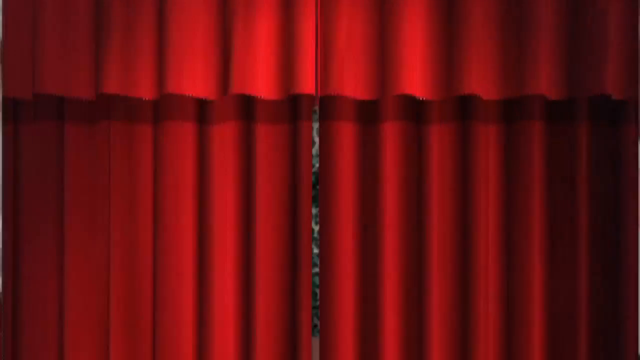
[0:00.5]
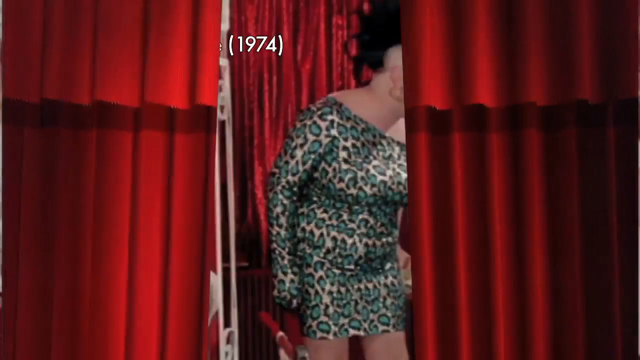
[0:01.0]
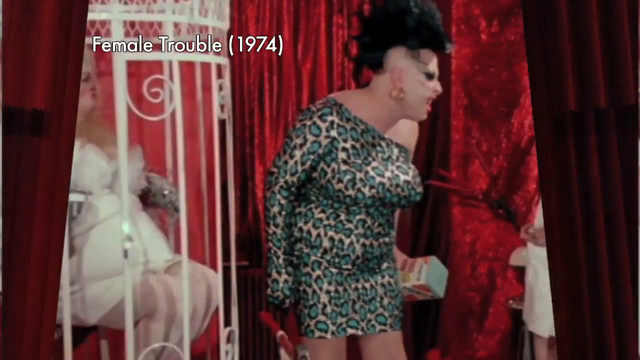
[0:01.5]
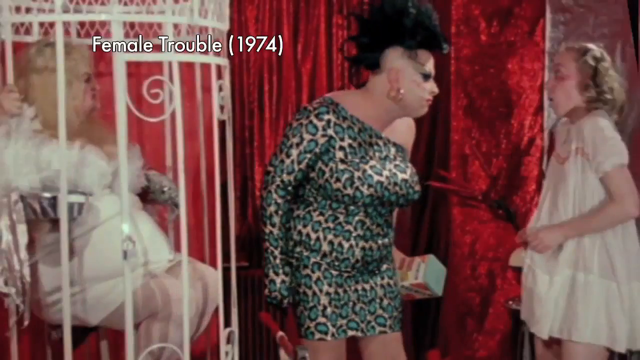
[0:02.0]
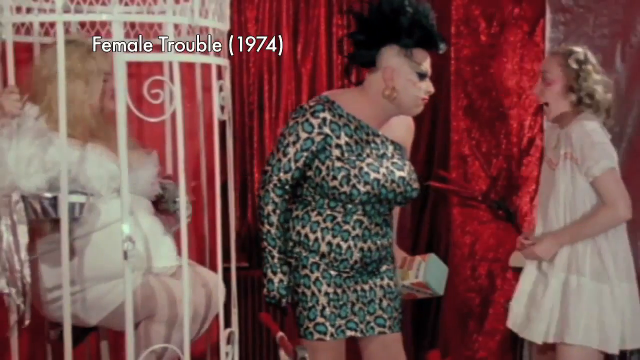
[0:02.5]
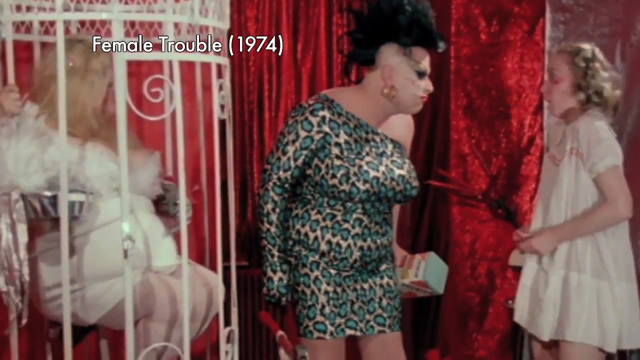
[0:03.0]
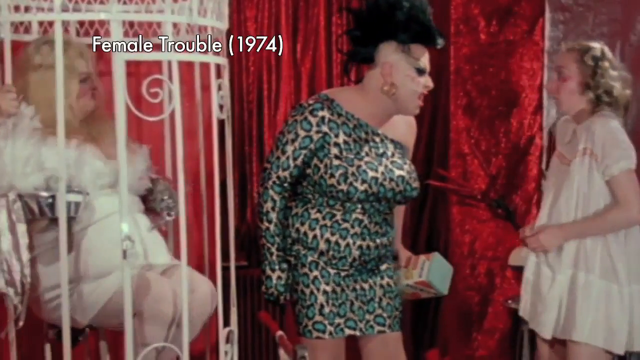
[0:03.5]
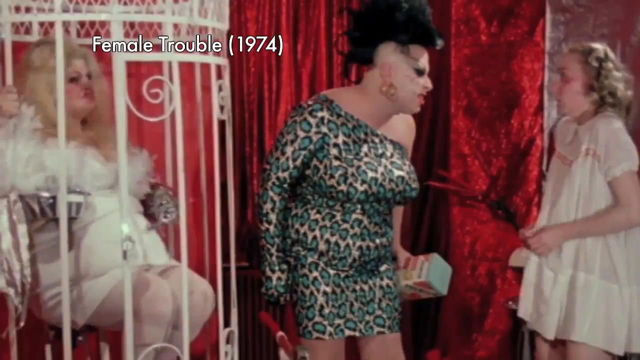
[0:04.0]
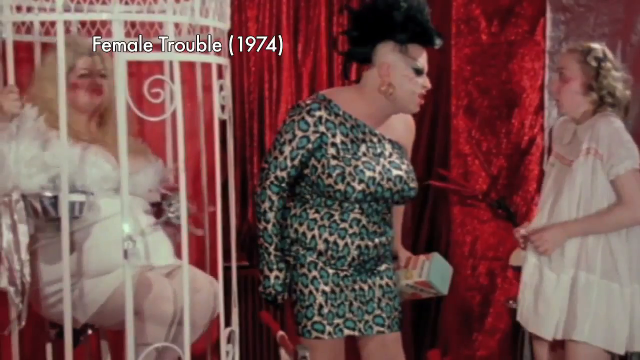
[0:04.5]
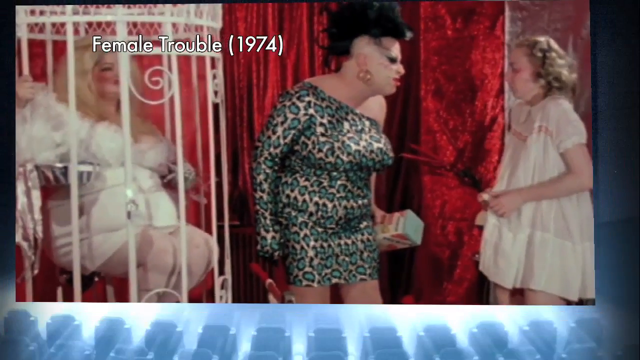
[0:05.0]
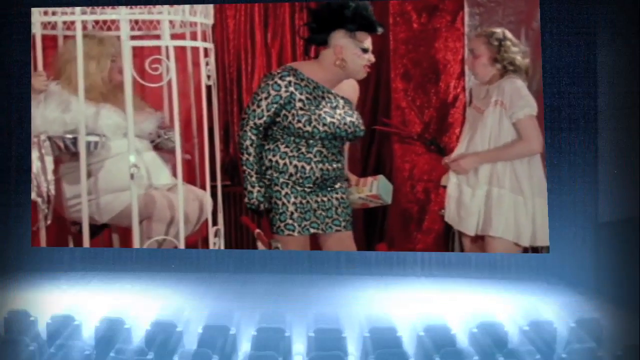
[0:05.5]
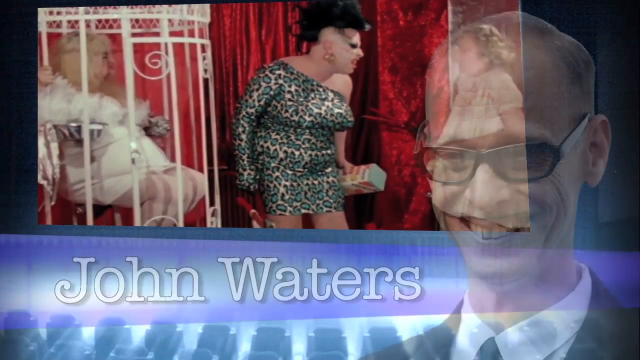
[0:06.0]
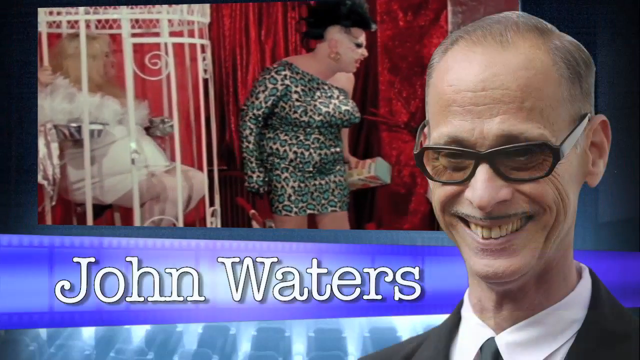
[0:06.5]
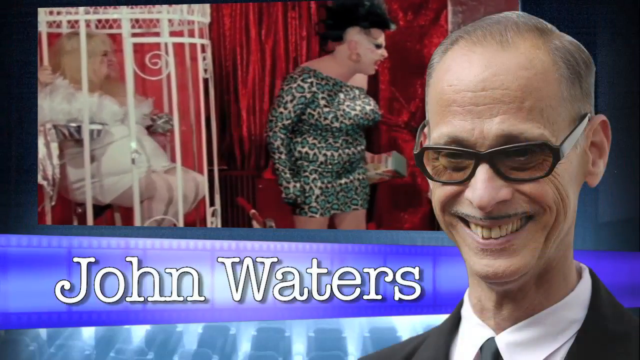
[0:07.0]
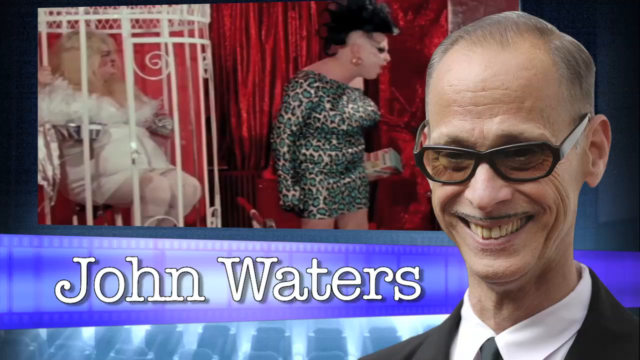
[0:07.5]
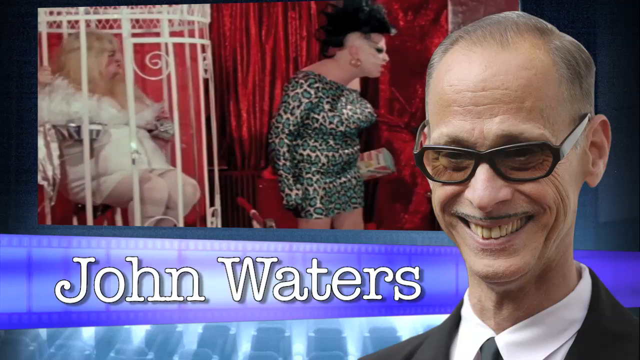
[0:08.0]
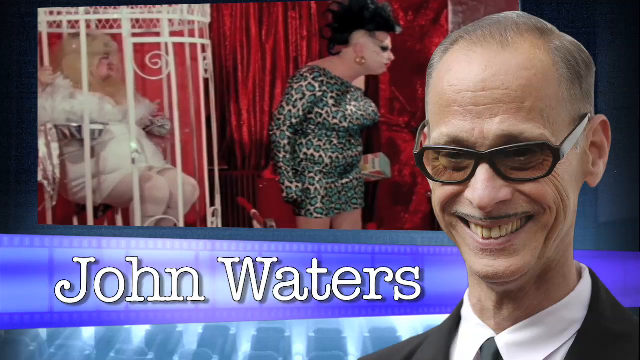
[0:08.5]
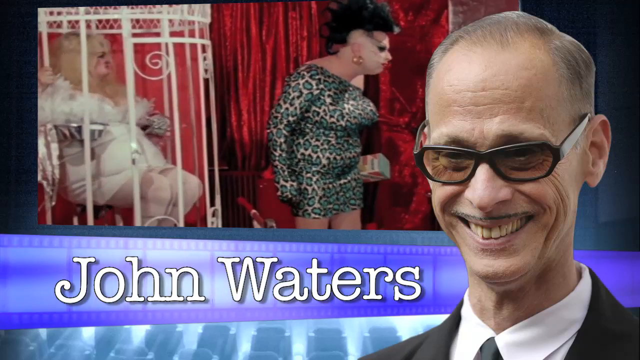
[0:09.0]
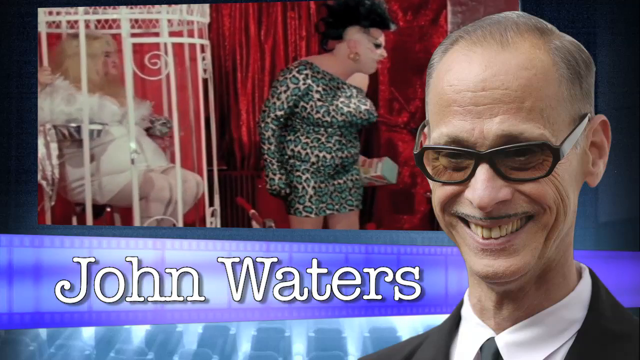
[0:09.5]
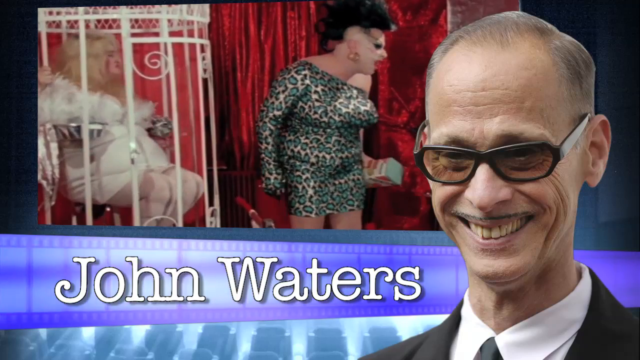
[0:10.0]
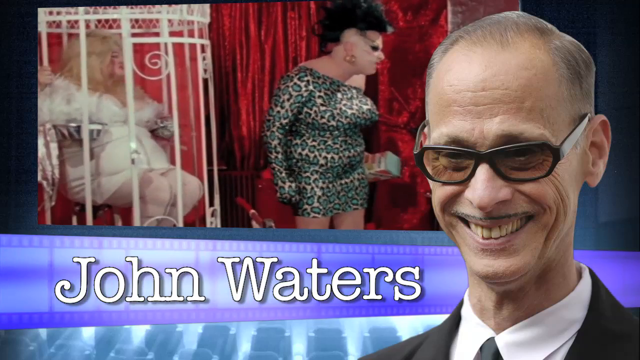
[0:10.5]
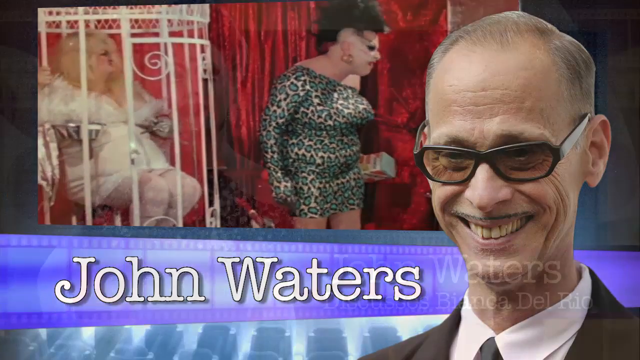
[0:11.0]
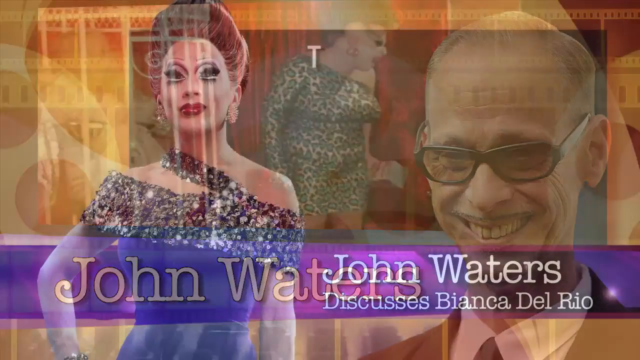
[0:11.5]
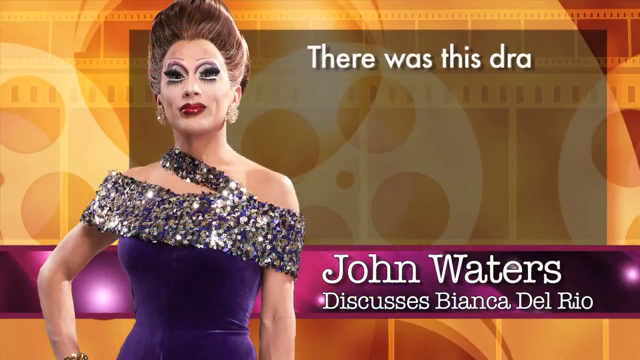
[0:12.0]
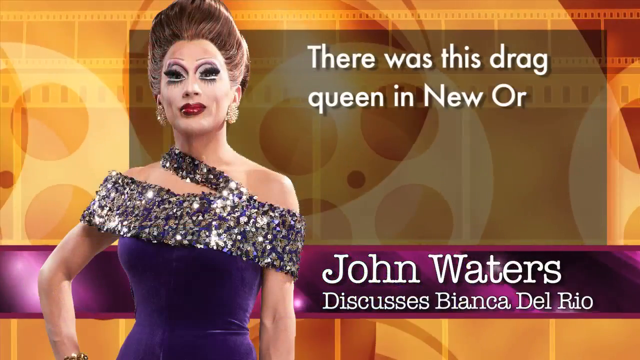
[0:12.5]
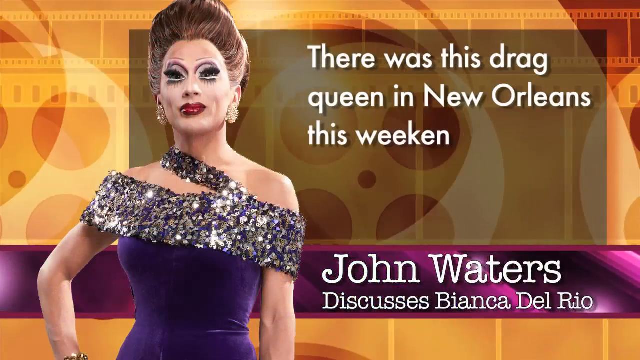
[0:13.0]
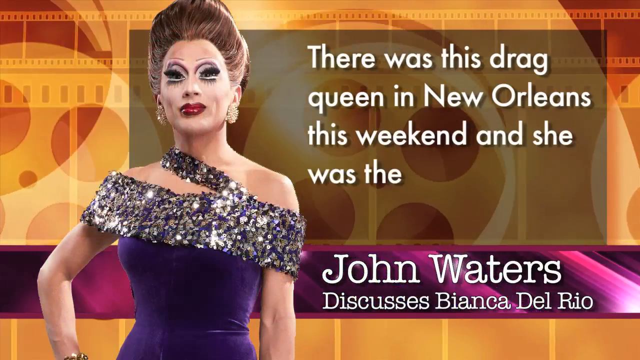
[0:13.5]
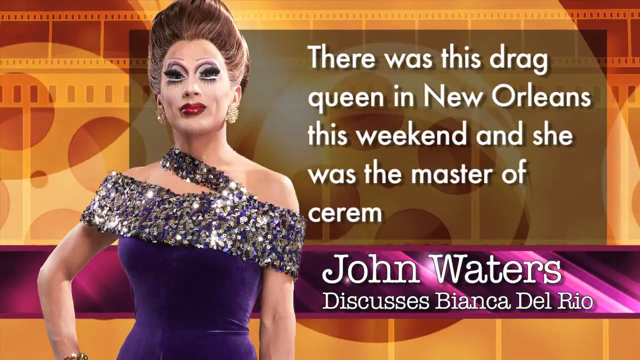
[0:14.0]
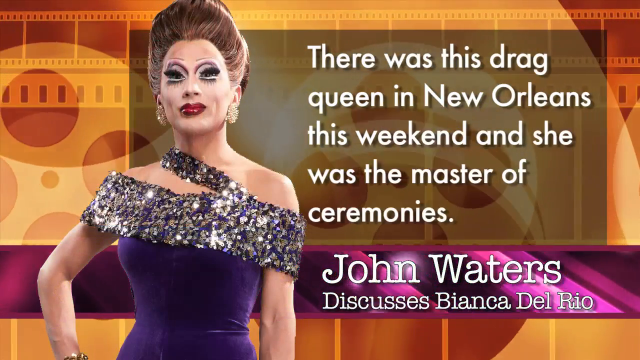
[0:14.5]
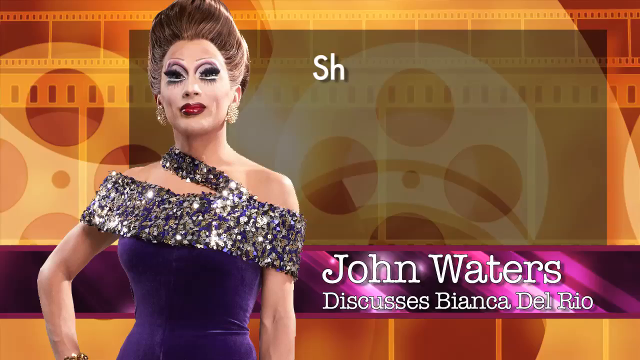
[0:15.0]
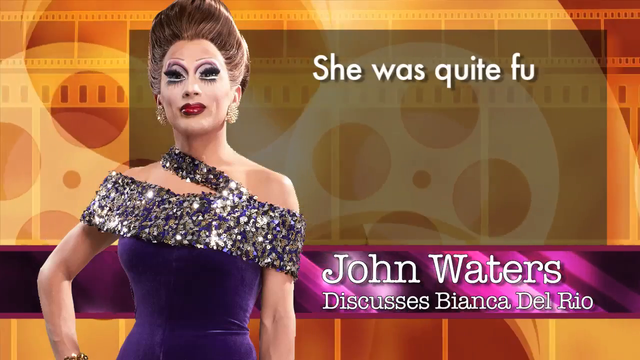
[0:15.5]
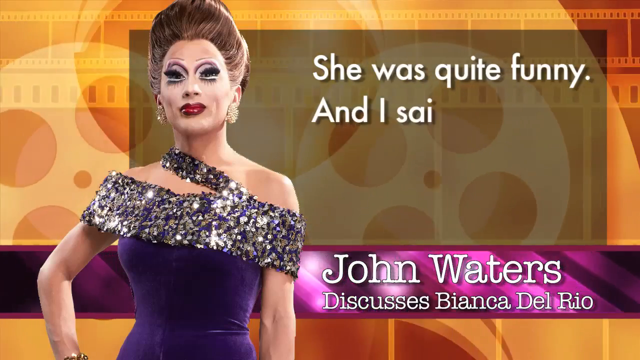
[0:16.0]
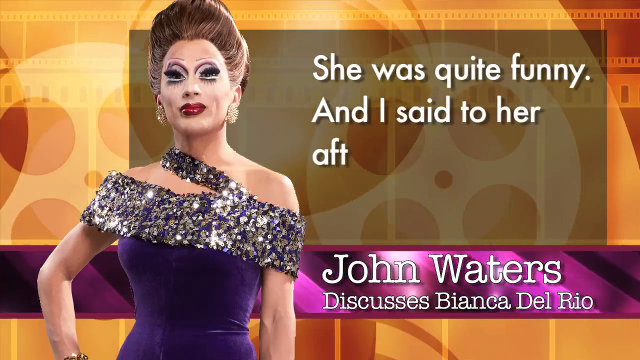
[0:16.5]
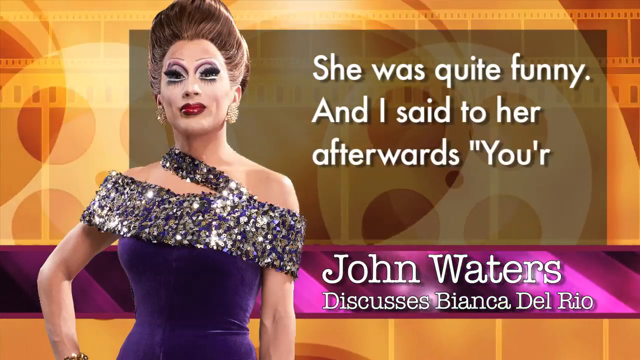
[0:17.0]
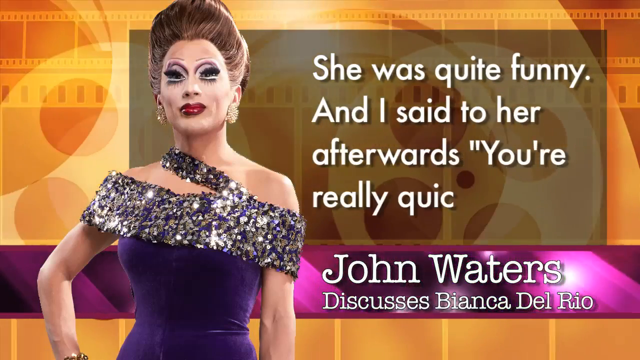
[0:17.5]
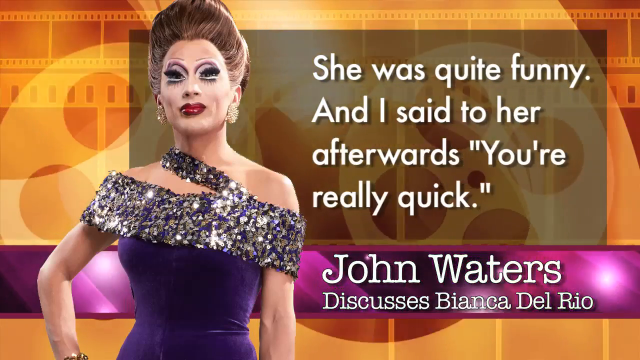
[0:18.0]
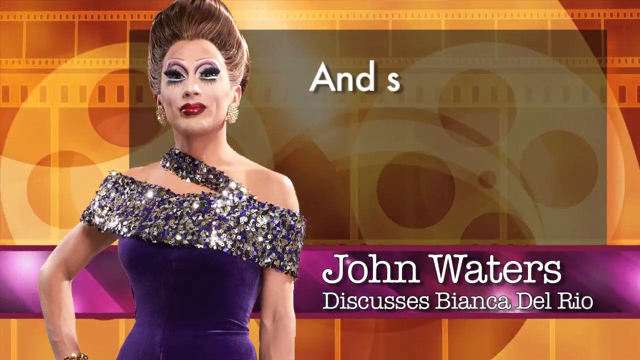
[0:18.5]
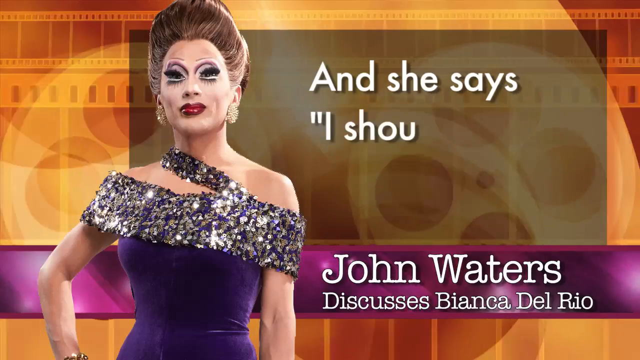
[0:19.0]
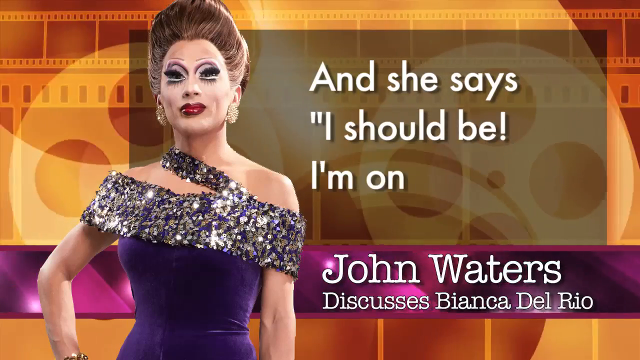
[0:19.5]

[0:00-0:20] Red curtains are pulled back, apparently revealing a transgender woman in a black wig. Someone is on the right side of the screen, and a person in a white dress is in a birdcage on the left side of the screen. Then "John Waters" appears in white font at the bottom right of the screen, apparently identifying a man who is smiling. His outfit is not fully visible, but he has a white collared shirt with a black top over it, maybe a suit. He wears black or dark brown glasses with brownish tinted lenses. Text then reads "John Walters discusses Bianca Del Rio." Further text reads "there was this drag queen in New Orleans this weekend and she was the master of ceremonies", followed by "She was quite funny. And I said to her afterwards, you're really quick. And she says, I should be, I'm on crack", with two exclamation points after it.